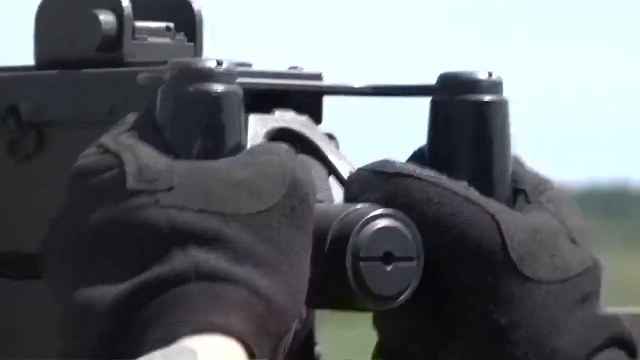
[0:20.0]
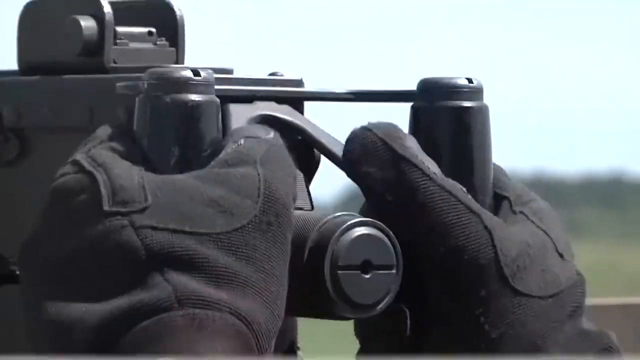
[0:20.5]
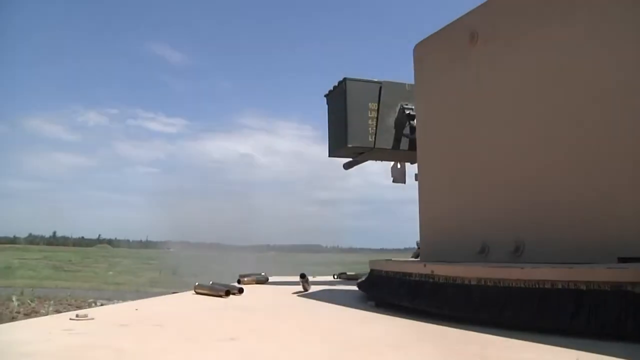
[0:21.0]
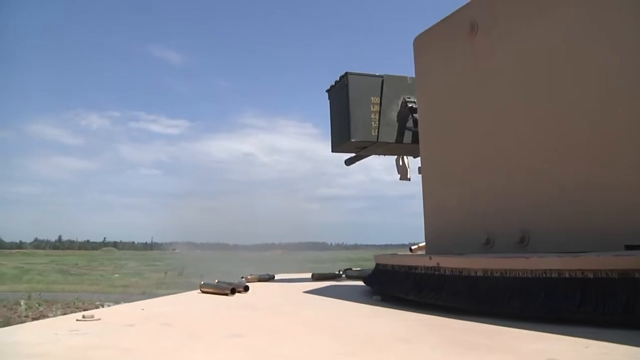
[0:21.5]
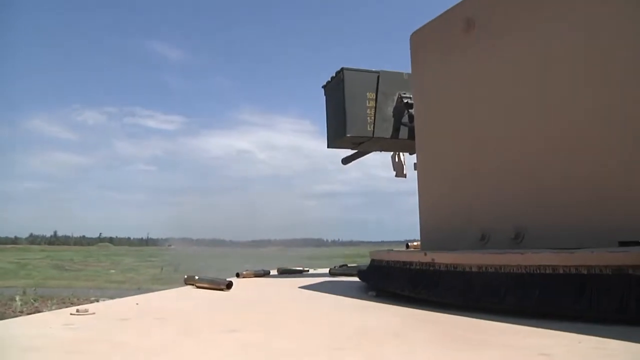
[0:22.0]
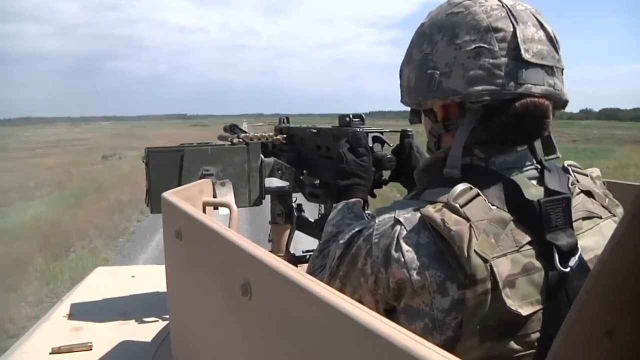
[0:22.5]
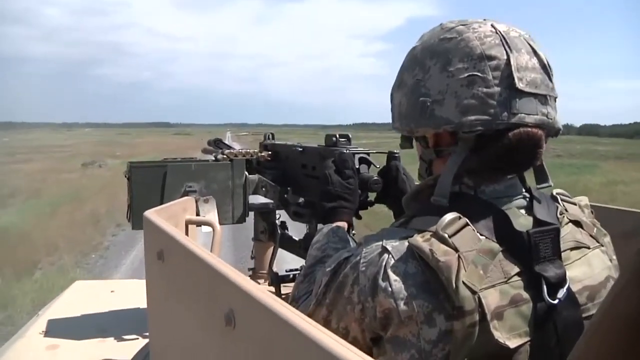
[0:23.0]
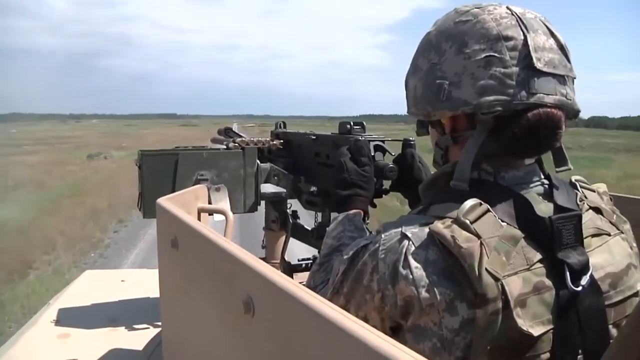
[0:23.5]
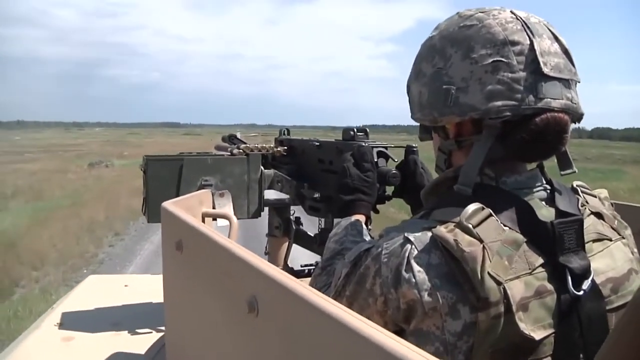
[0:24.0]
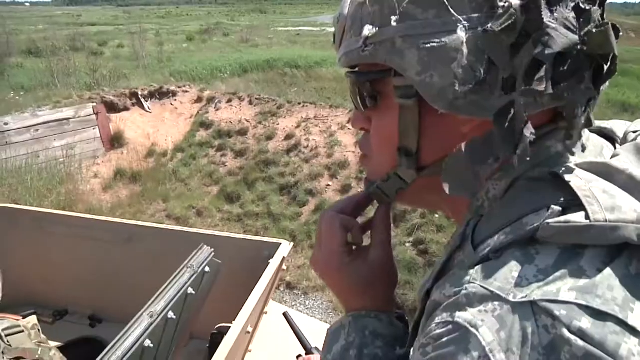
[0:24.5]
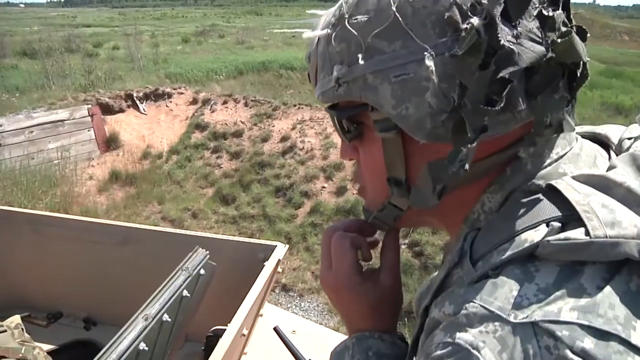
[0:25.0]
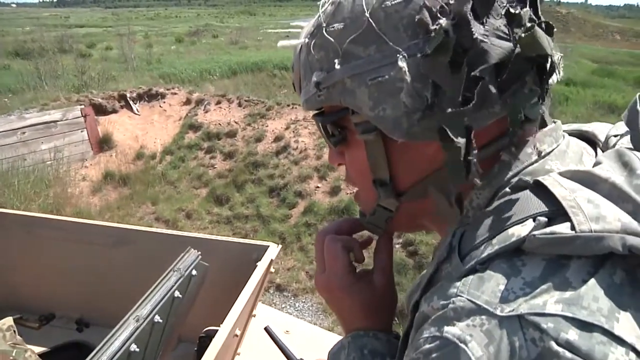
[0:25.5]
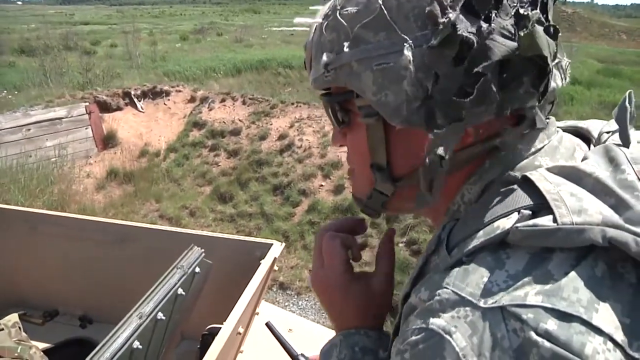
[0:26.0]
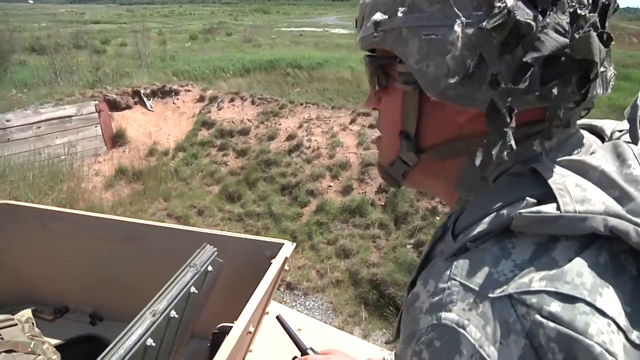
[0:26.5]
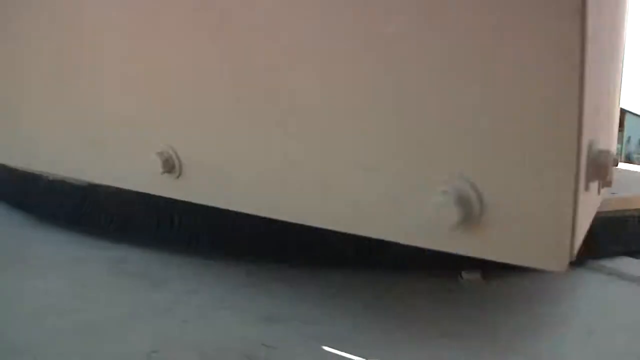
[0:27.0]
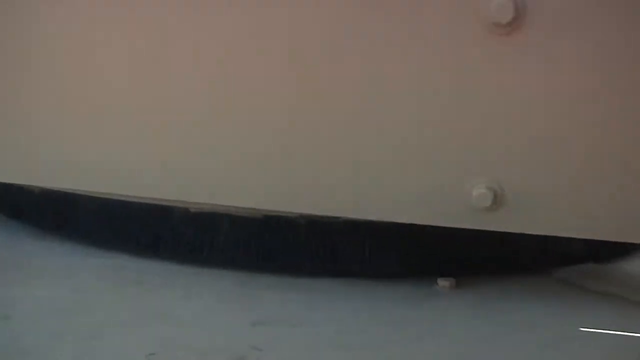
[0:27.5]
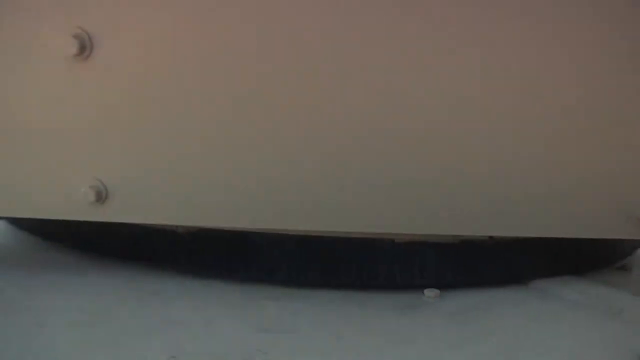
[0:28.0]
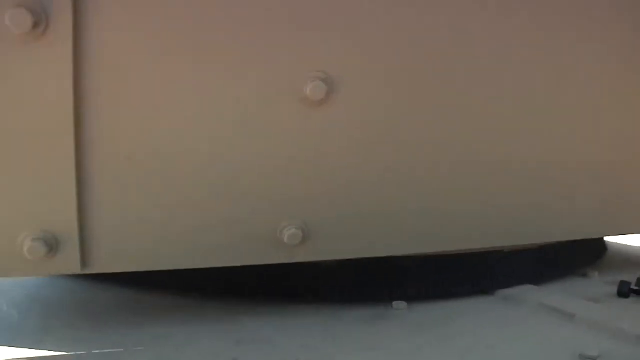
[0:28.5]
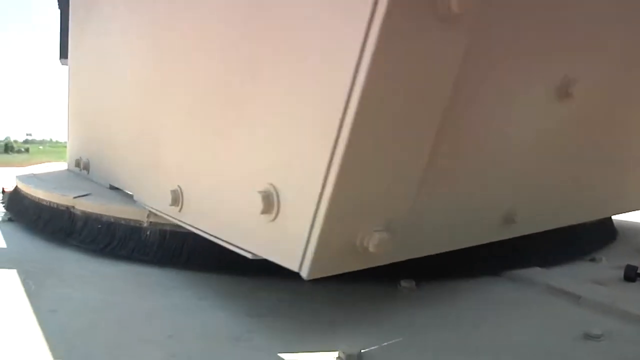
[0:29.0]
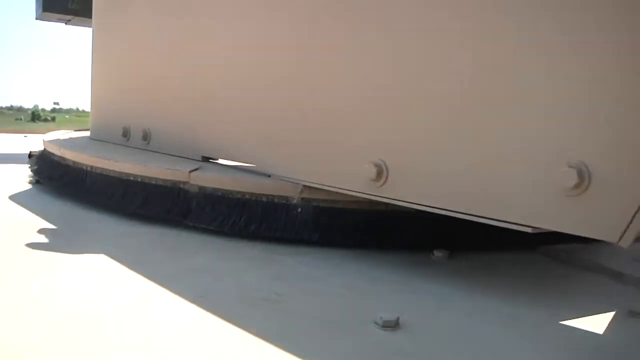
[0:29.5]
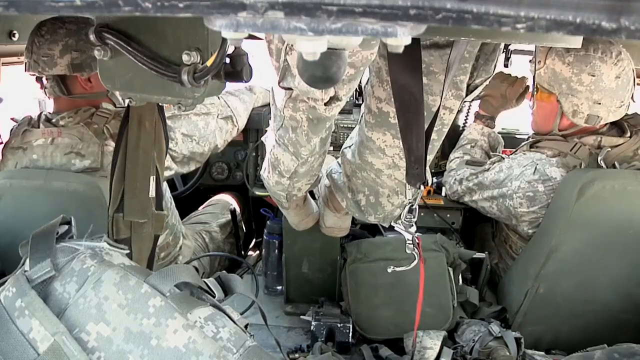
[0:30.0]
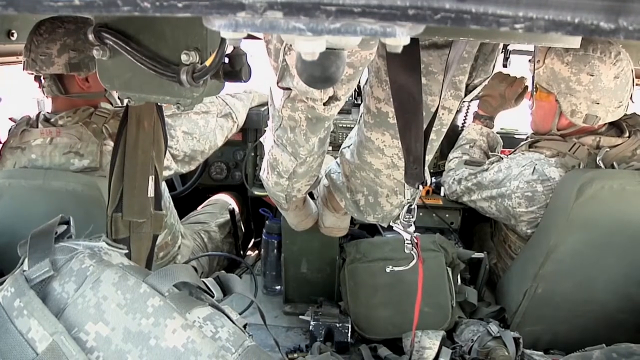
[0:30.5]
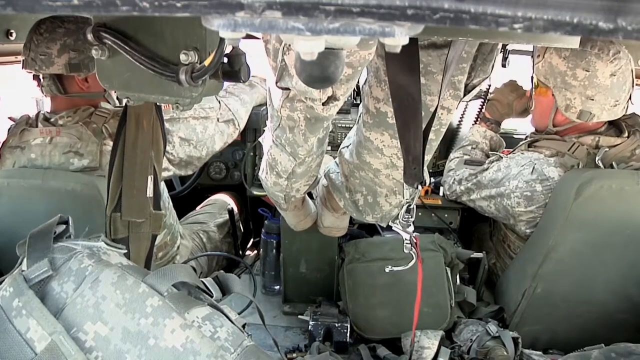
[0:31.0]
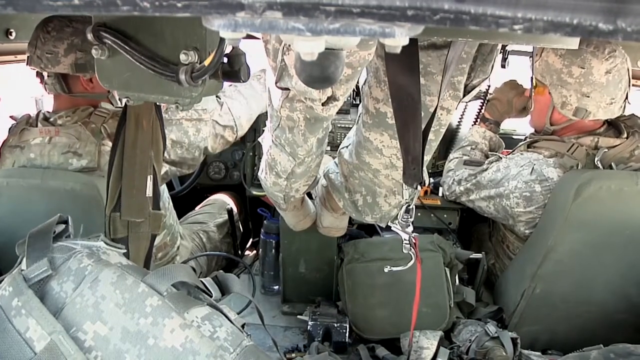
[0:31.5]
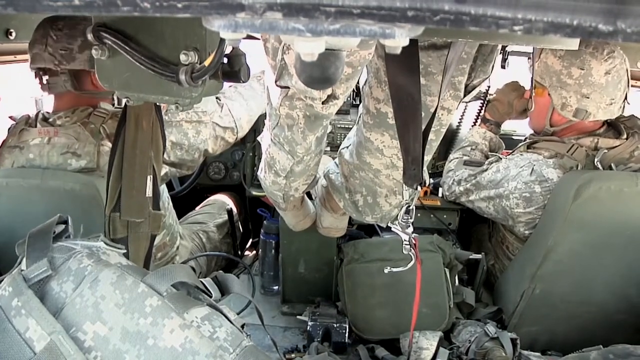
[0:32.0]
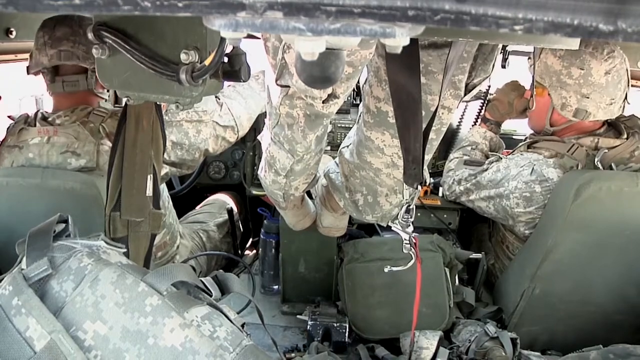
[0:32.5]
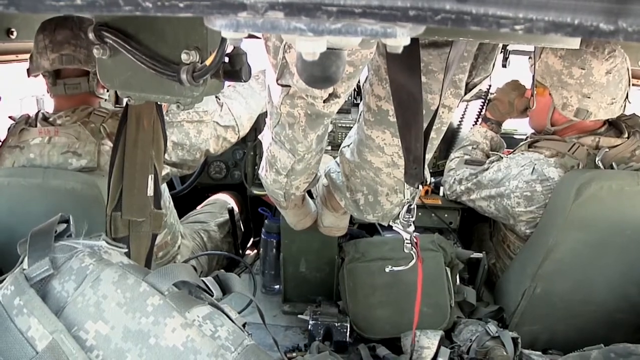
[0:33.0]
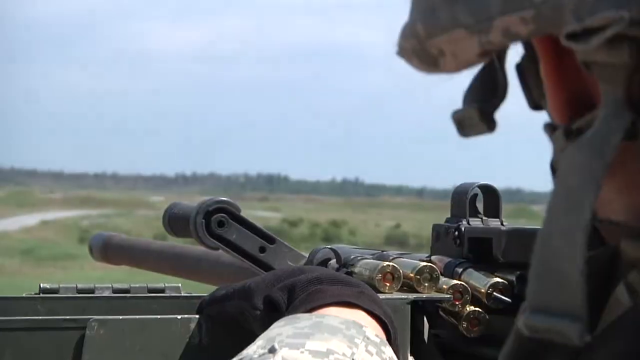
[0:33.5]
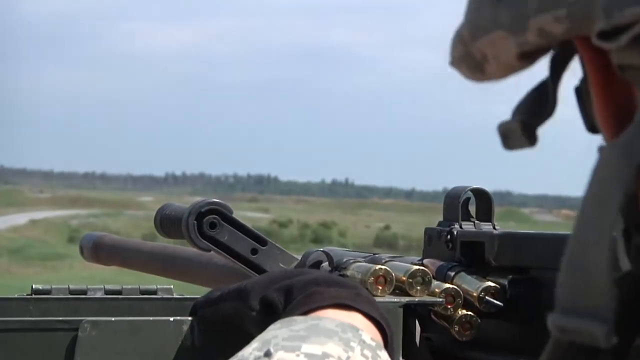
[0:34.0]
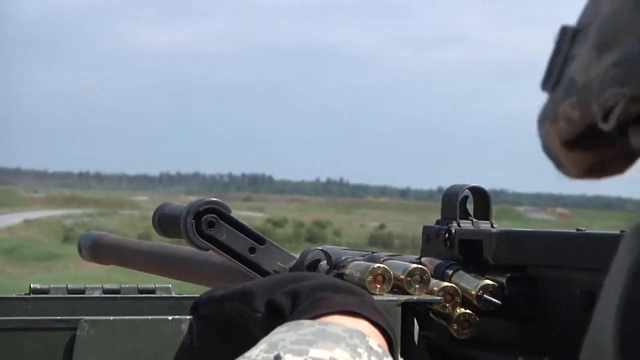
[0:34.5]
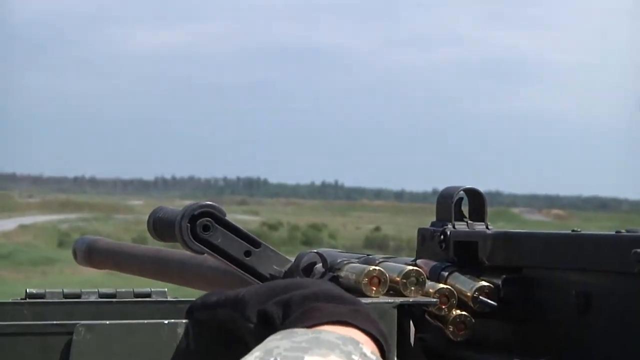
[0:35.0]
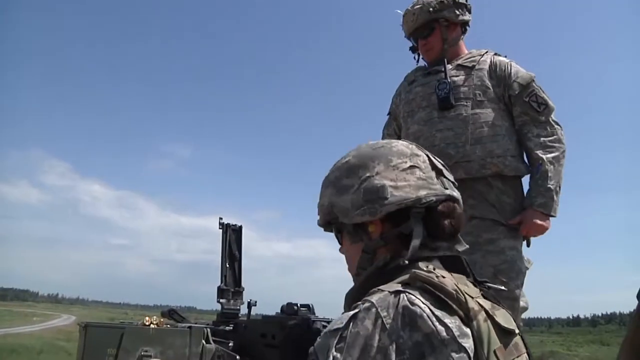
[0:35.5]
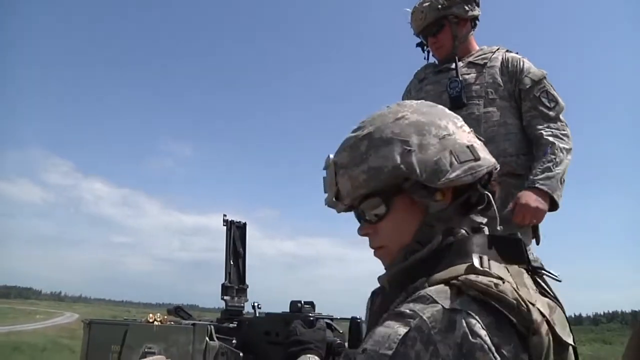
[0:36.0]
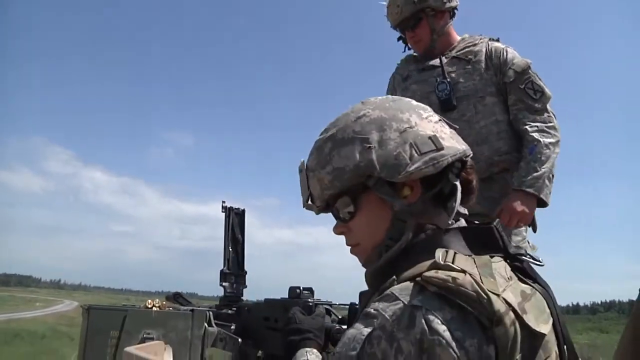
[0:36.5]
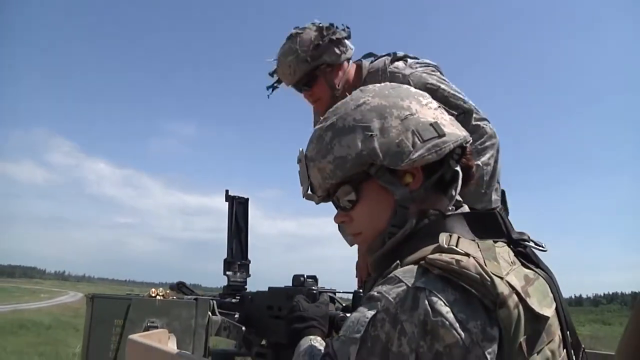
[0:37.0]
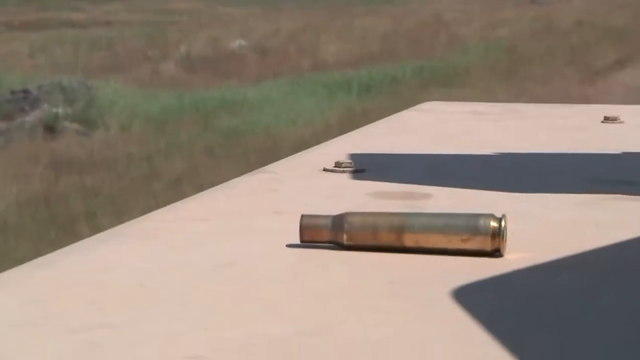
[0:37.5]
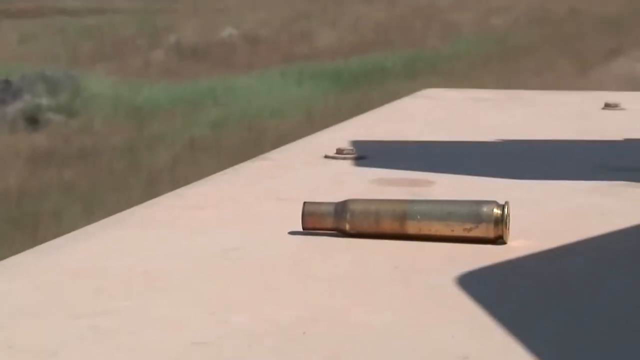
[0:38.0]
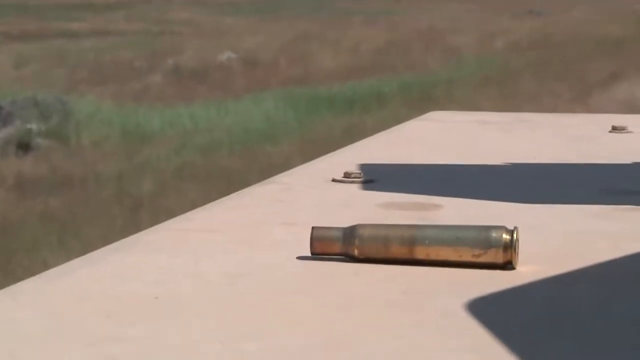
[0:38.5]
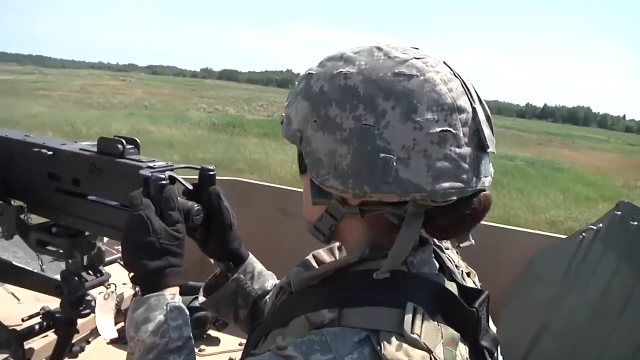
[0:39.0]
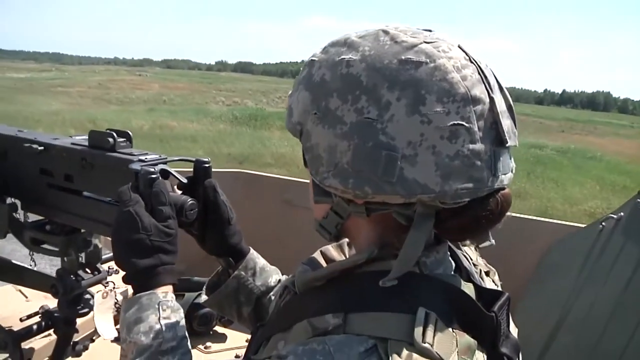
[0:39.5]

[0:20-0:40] The camera is zoomed in on the soldier pressing on the machine gun, and its vibration shows it is firing. The shot changes to bullet shells falling on the ground with a bit of smoke in the air. Outside the vehicle the area is clear, with no one there, possibly a testing site for machine guns. He continues to shoot with the camera behind him; the camera is not on a mount but handheld, as the image is not stable. A soldier behind him in protective gear is also speaking. The machine gun mount rotates. Inside the tank, the rest of the soldier's body is visible along with two other people, possibly controlling how the vehicle moves and helping to pilot it, and everyone is concentrated on their task. Soldiers on top of the tank are possibly reloading and fixing the ammunition, and ammunition rounds are also on the ground.